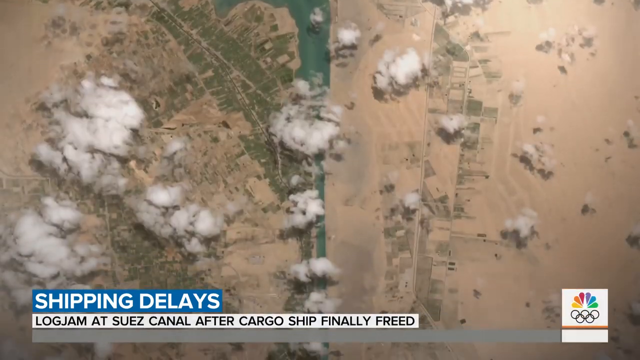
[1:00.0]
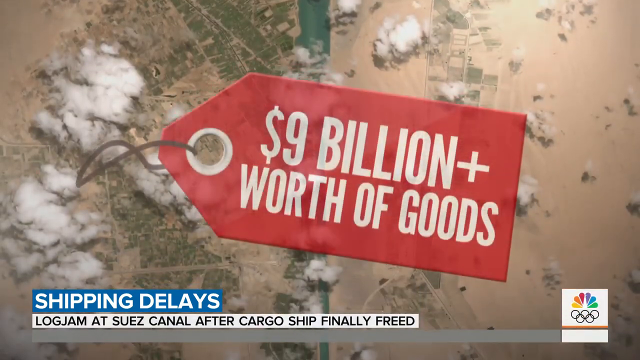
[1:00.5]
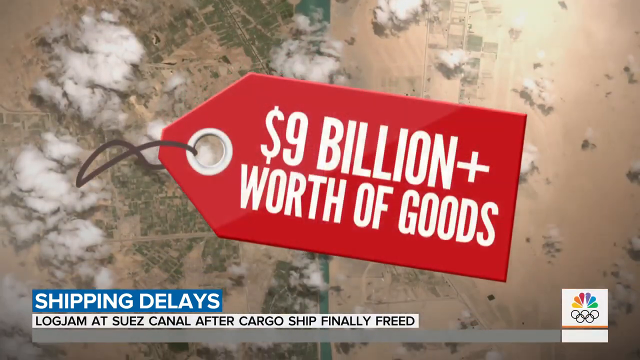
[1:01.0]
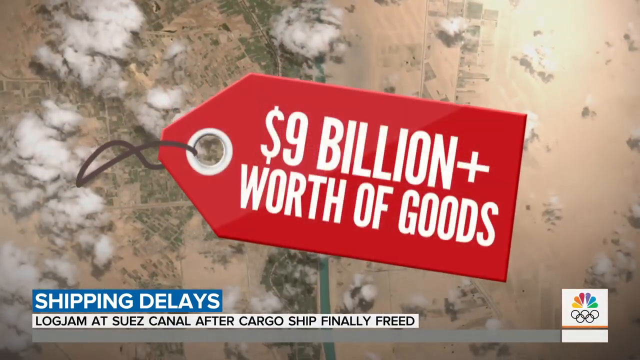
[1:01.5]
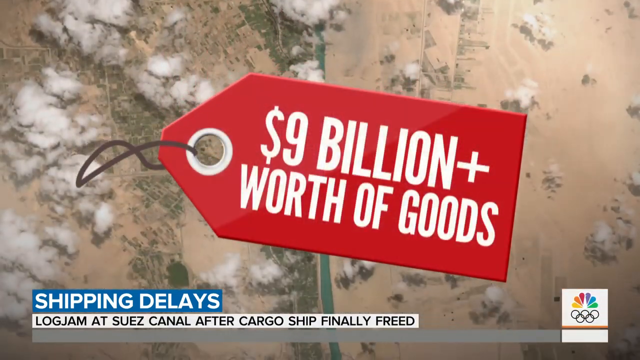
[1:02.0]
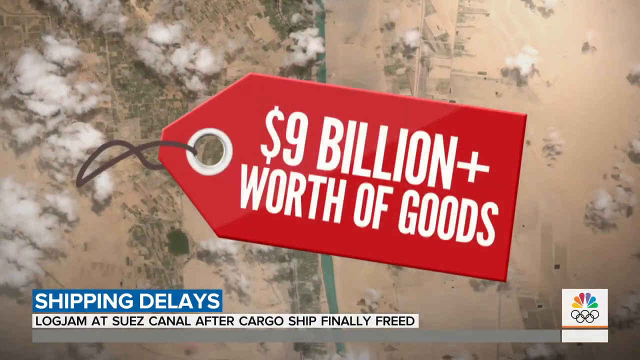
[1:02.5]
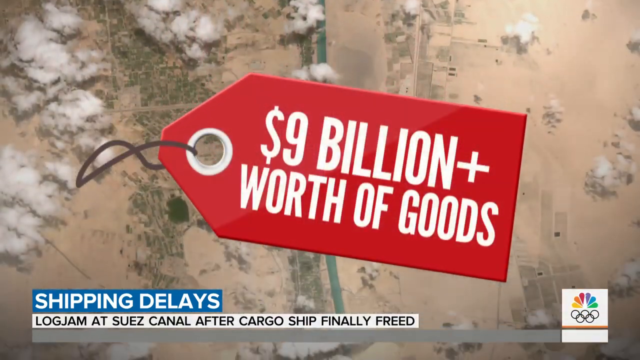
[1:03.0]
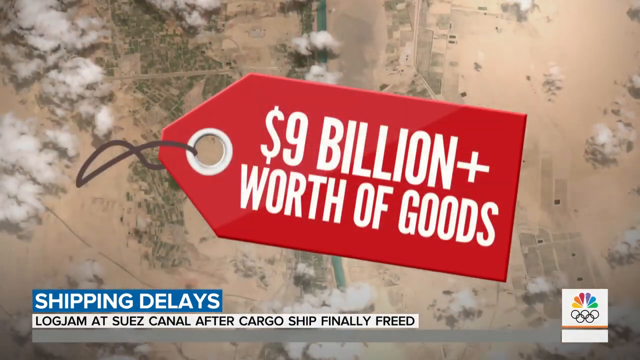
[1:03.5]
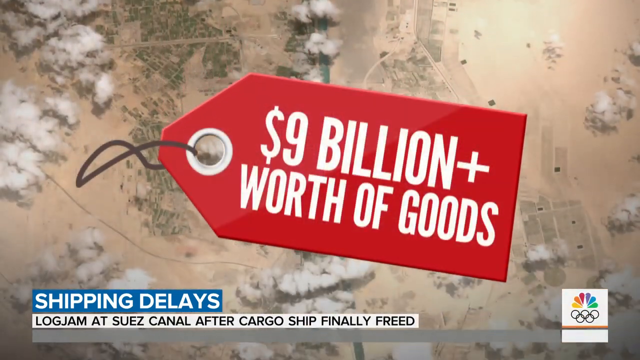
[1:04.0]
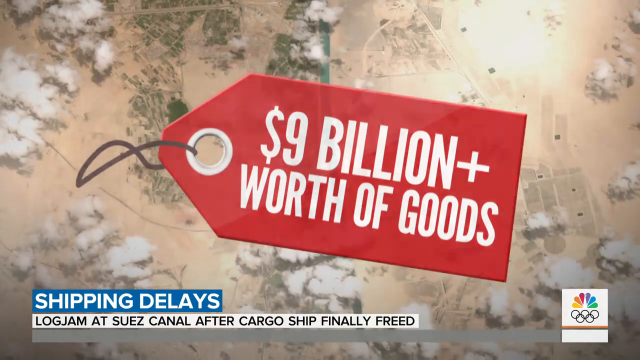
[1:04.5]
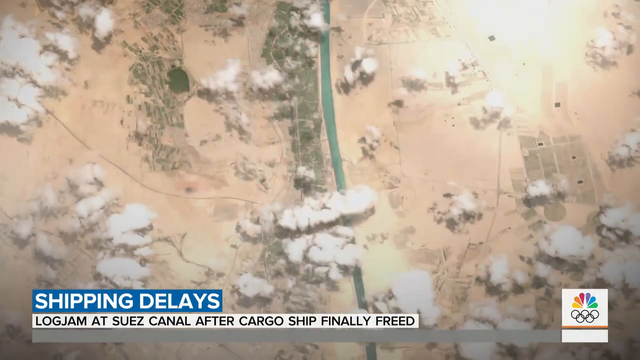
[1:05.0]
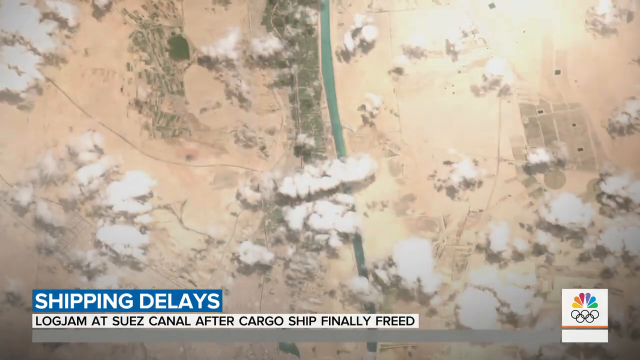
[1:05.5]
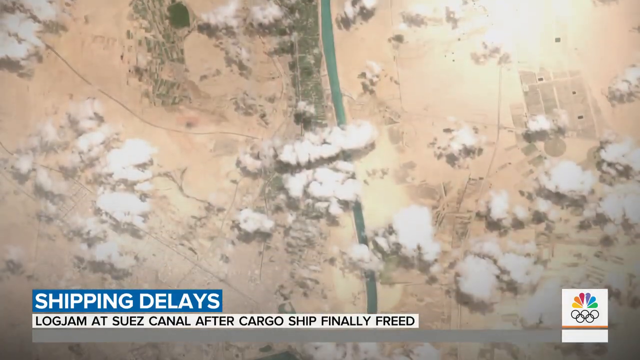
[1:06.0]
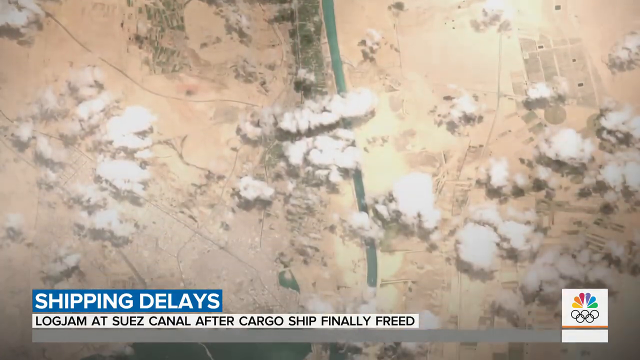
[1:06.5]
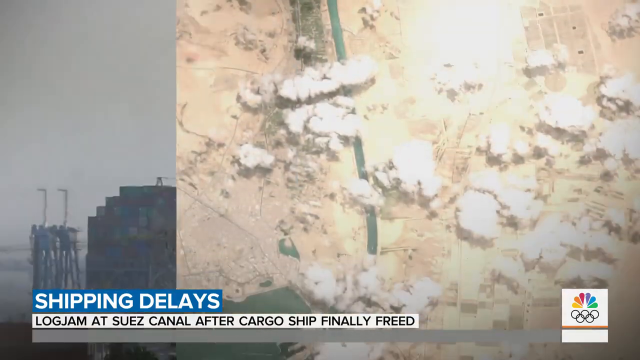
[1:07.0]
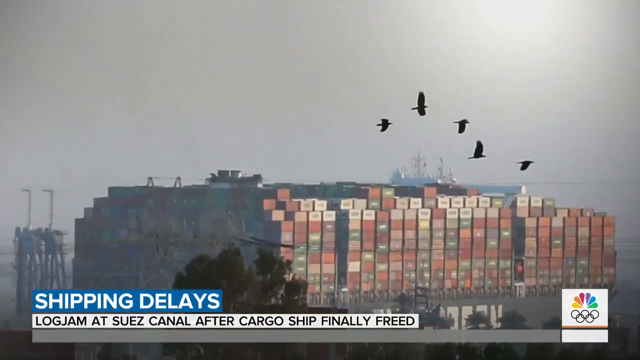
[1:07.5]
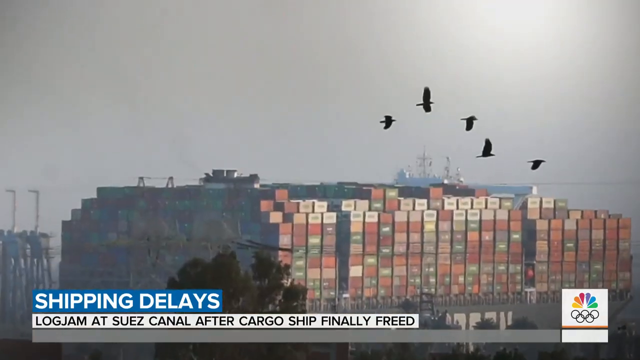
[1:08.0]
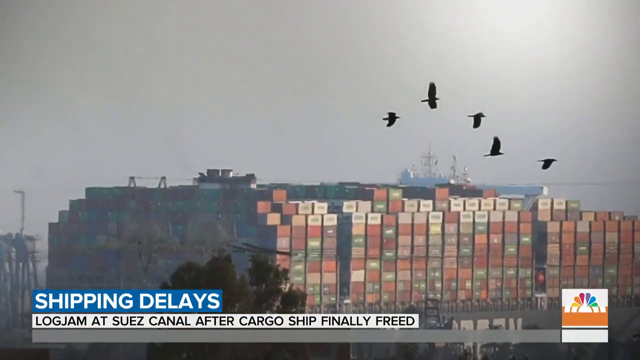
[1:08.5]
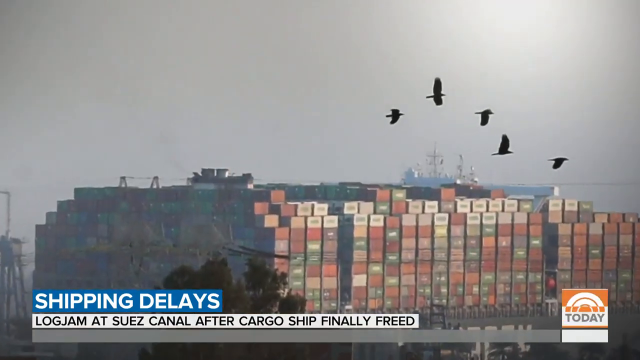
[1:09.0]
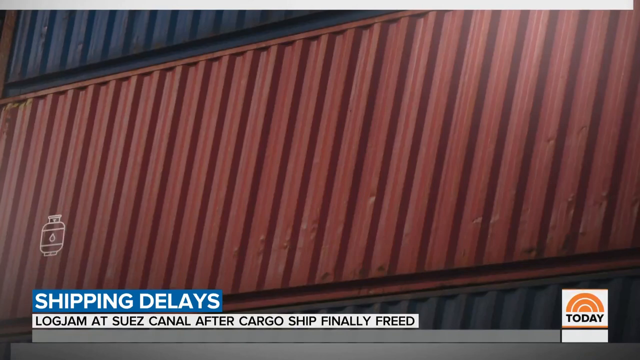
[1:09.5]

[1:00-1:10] A drone-like view aims downward at some land. A red tag effect in the middle of the screen reads "9 billion plus worth of goods" in large white text. The camera moves downward while the title stays the same, and text at the bottom left reads "Shipping delays log jam at Suez Canal after cargo ship finally freed." The next scene is an image of many cargo boxes stacked on top of each other, about 10 to 12 high in most of the rows; they are different colored square boxes, side by side. Five black crows are flying nearby, a ship is out in the body of water in the distance, and the sky above is very gray.